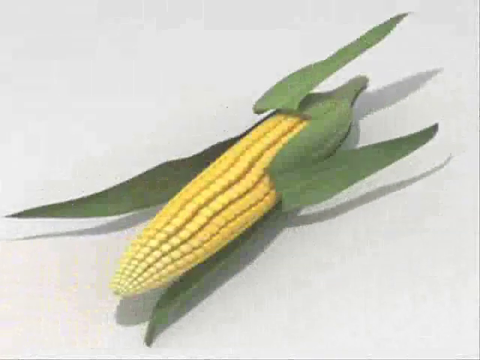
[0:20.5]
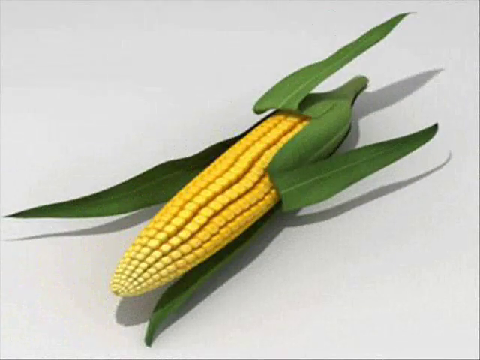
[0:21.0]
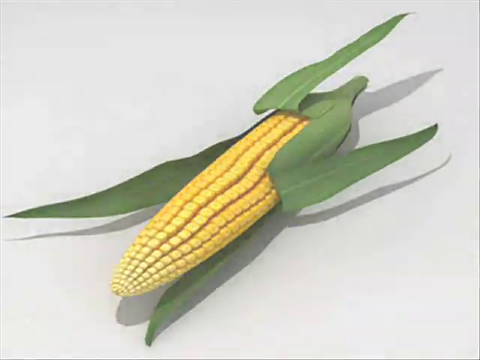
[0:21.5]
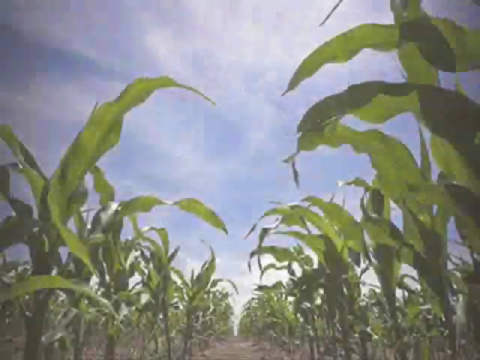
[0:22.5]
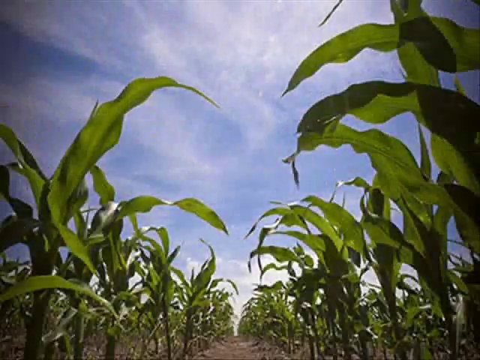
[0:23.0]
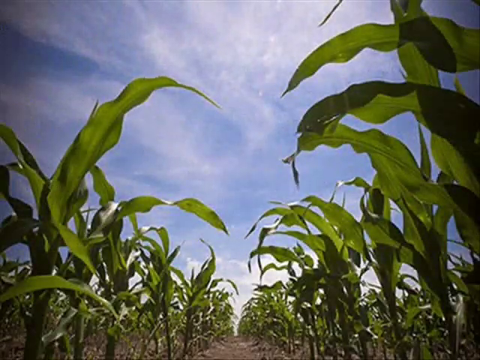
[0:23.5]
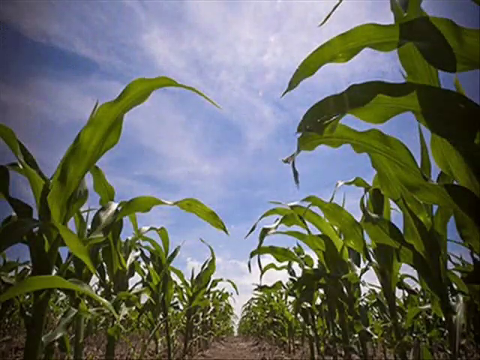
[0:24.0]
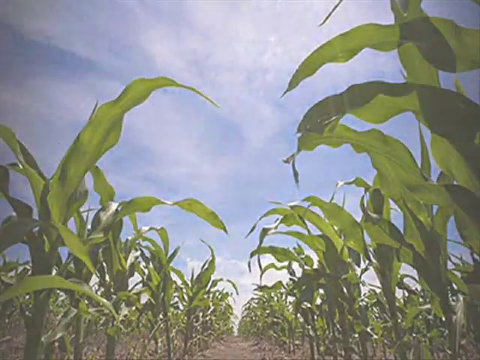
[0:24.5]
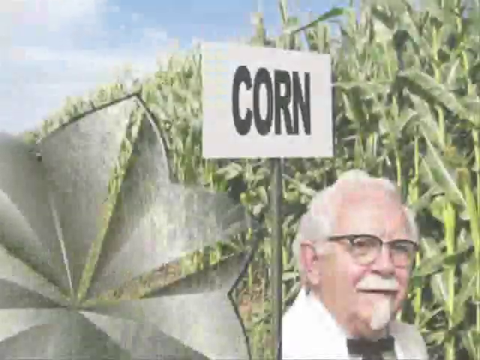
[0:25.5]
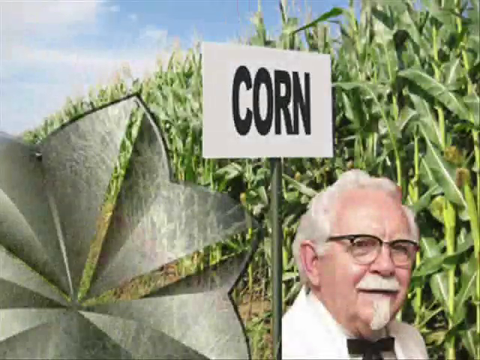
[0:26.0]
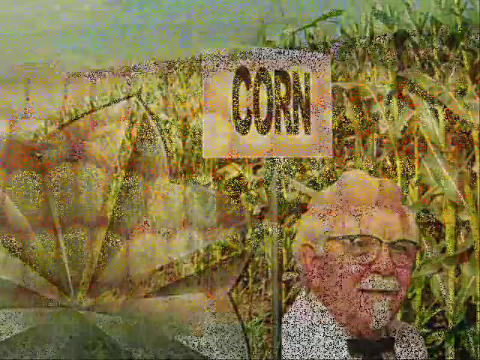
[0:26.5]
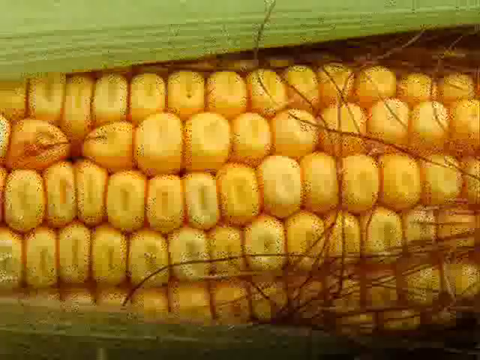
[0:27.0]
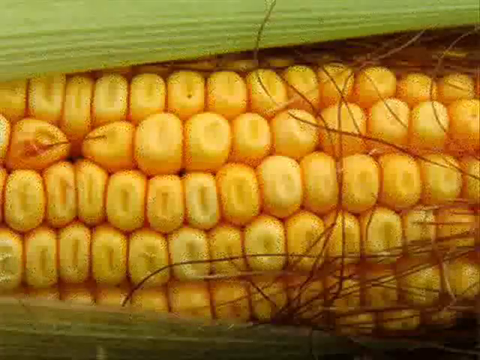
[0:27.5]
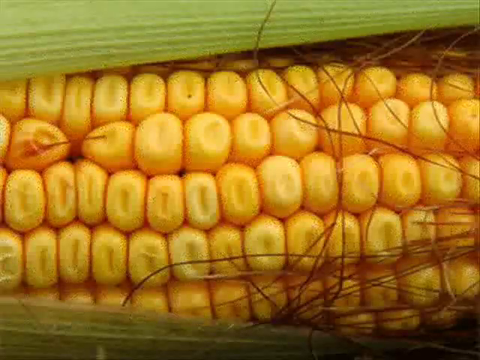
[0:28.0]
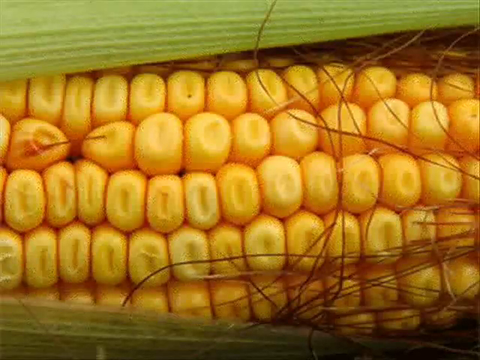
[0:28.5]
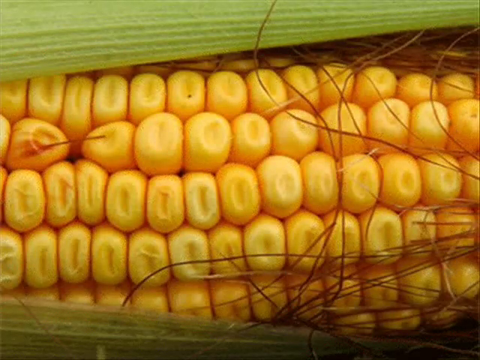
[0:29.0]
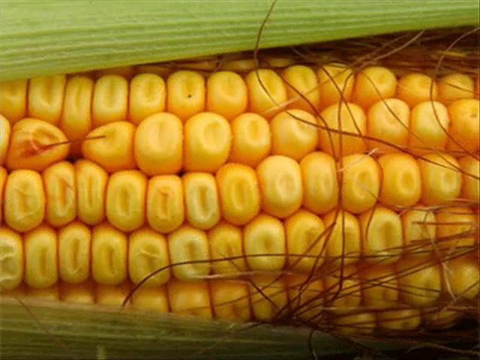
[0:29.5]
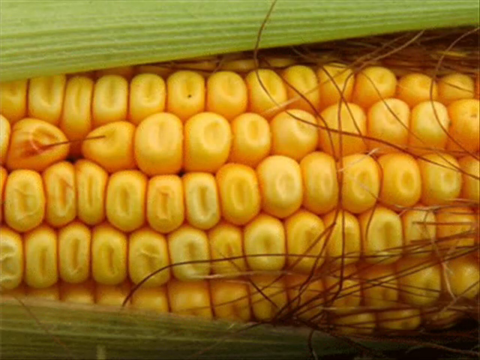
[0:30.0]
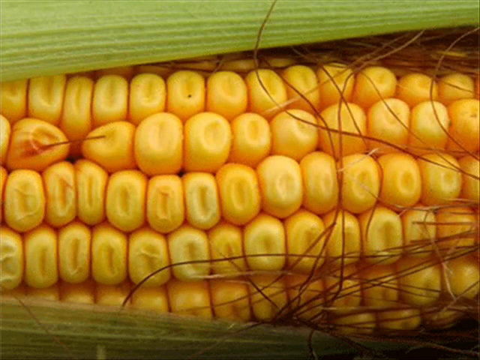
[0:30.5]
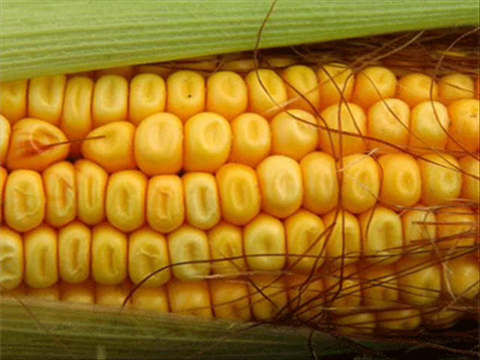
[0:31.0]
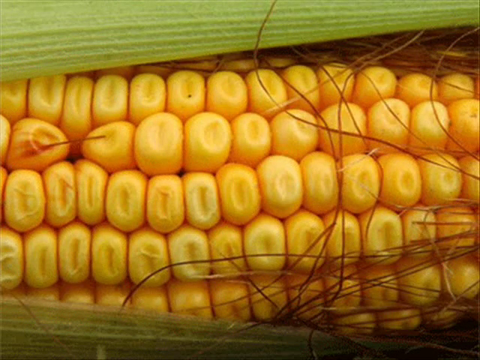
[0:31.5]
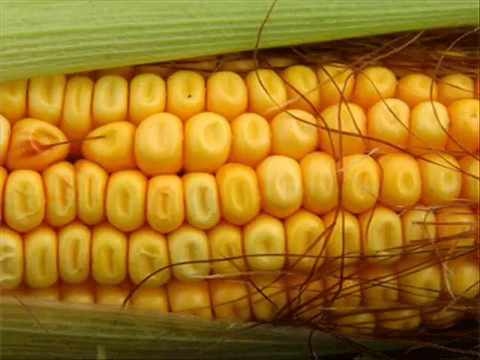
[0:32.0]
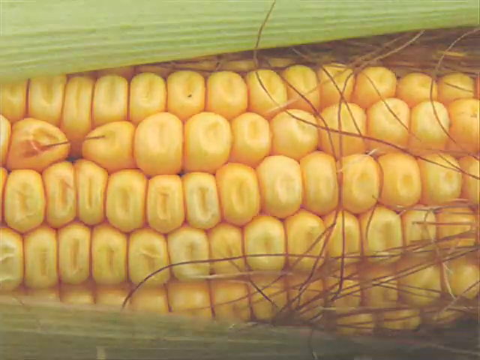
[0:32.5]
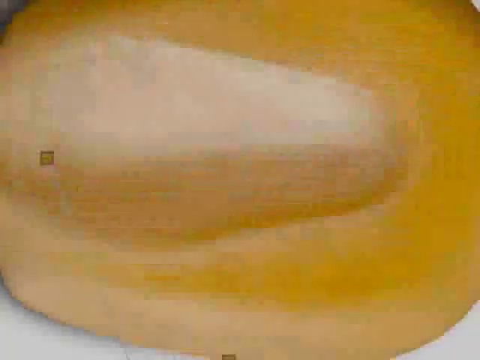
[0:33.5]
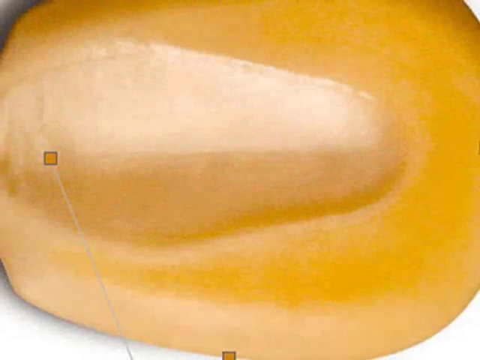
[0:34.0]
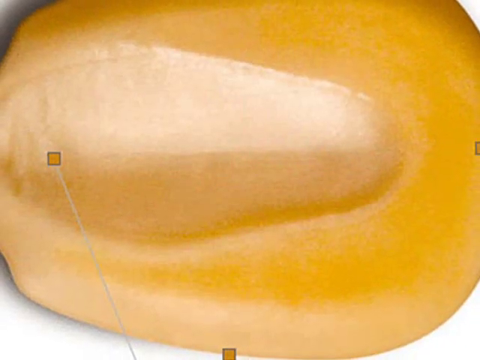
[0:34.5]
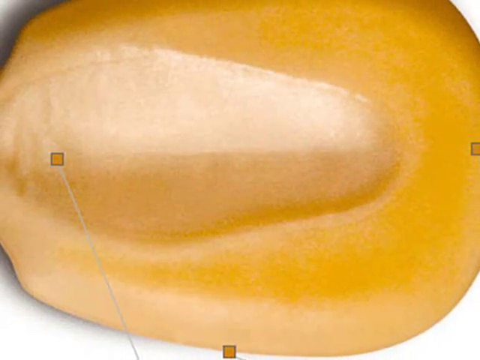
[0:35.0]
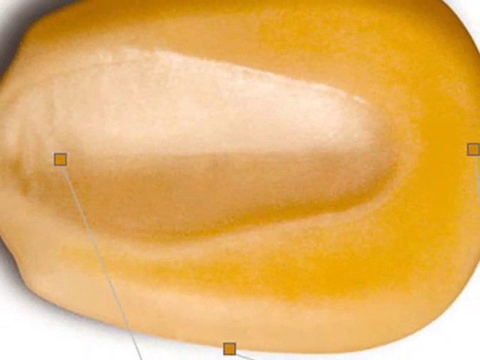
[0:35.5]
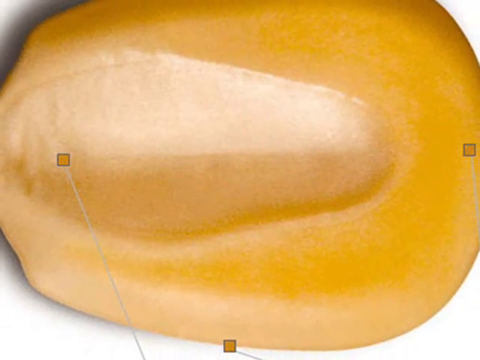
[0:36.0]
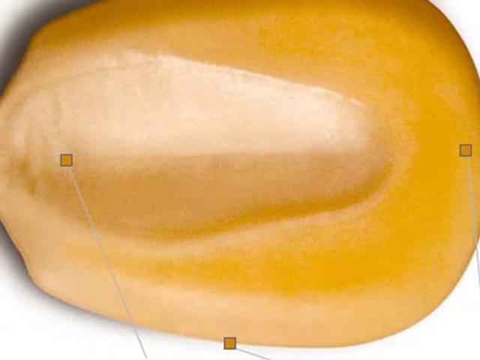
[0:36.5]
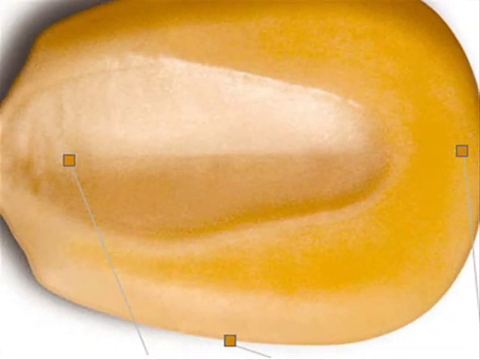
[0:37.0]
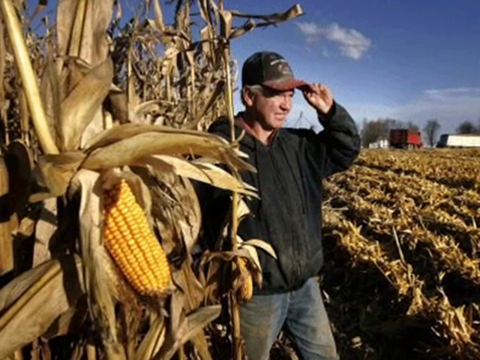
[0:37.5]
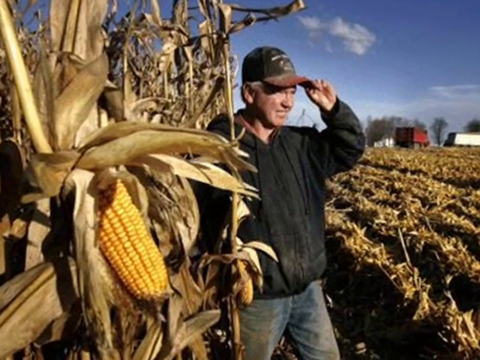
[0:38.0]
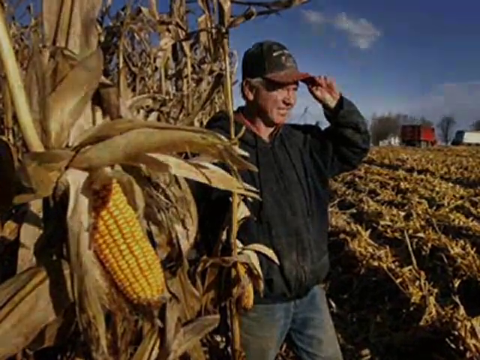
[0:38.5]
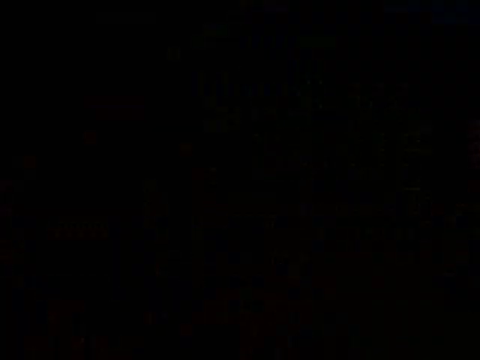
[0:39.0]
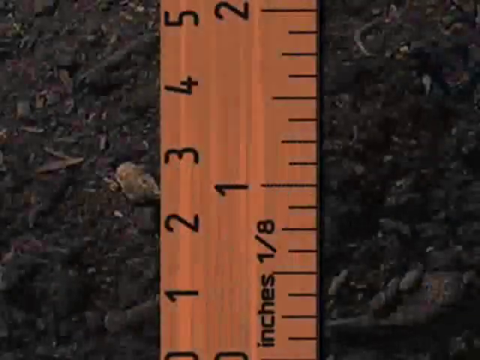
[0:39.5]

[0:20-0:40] After a transition, an ear of corn on the cob that has not been fully peeled, with the husk peeled back but still on, is on a white table. Light comes from above, casting a shadow from the corn onto the table. The next image is taken from the ground in a cornfield, looking upward so the leaves of the corn stalks are kind of overhead against a very cloudy sky. Then an older man with white hair, a mustache, a little goatee, and glasses holds a sign that looks like it says "corn," with a lot of corn behind him. A close-up video of an ear of corn follows, showing some of its stringy hairs. Next is what looks like a single kernel of corn, zoomed in very tightly. Then a man, apparently a farmer, wearing a ball cap and a jacket holds his hat; the corn is ripe and the stalks are a little burnt-looking, so it looks like it could be fall, and a farm is visible in the background.